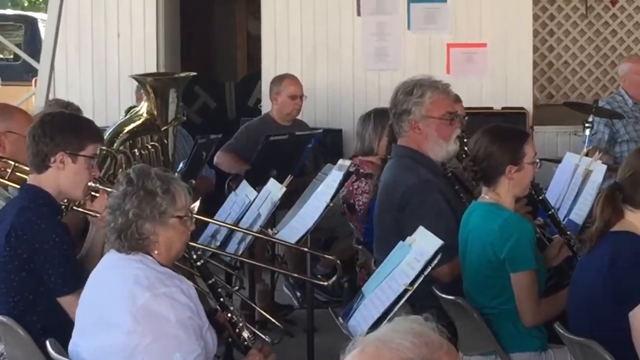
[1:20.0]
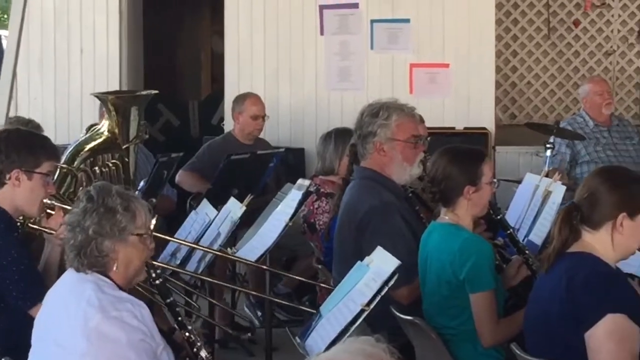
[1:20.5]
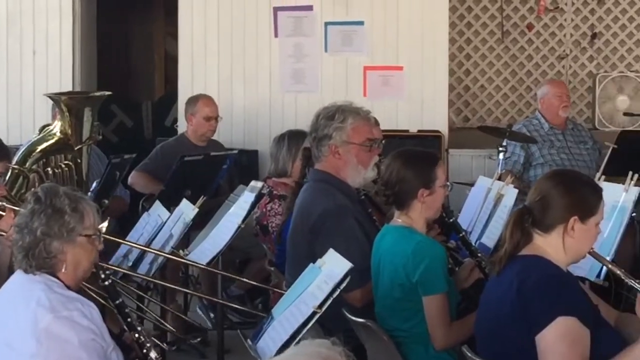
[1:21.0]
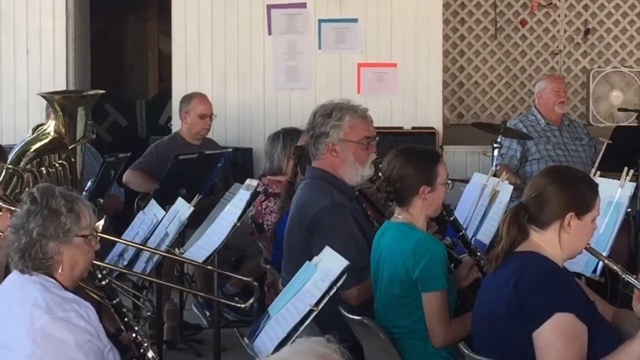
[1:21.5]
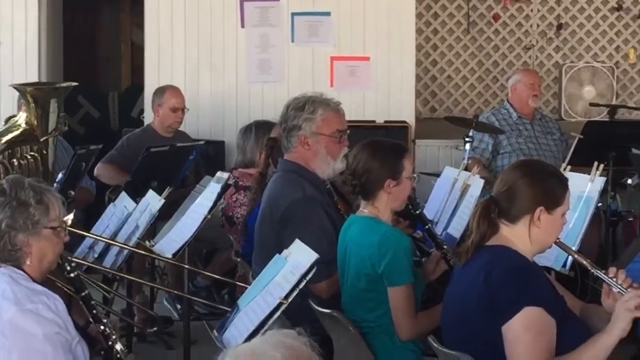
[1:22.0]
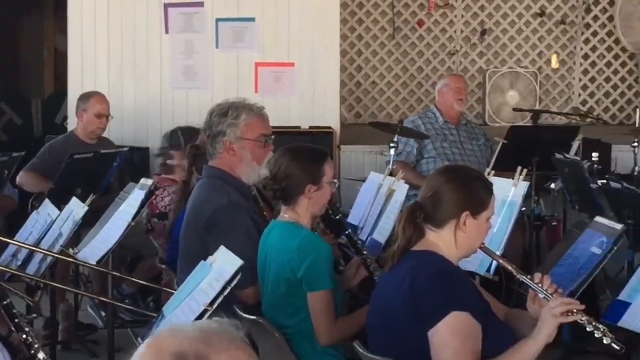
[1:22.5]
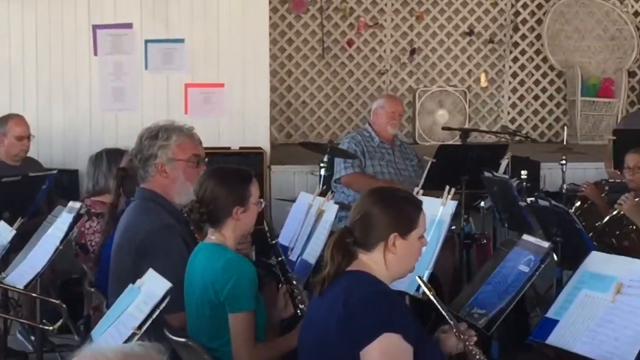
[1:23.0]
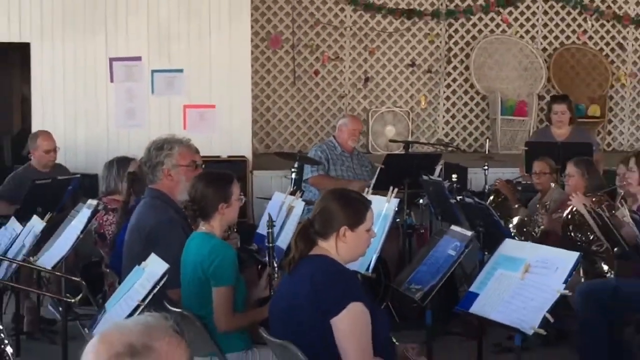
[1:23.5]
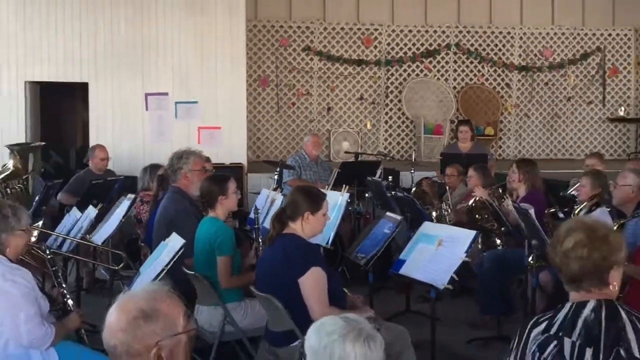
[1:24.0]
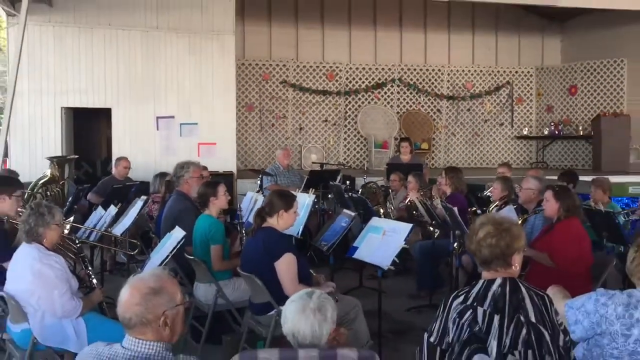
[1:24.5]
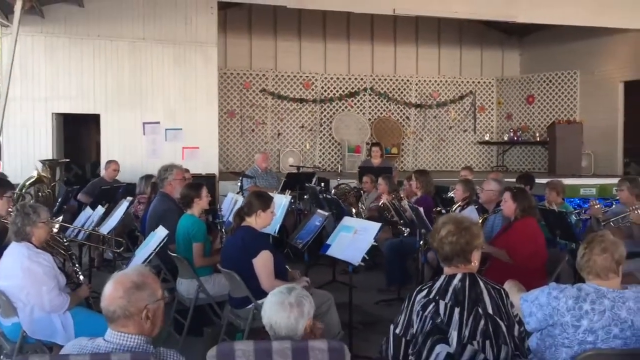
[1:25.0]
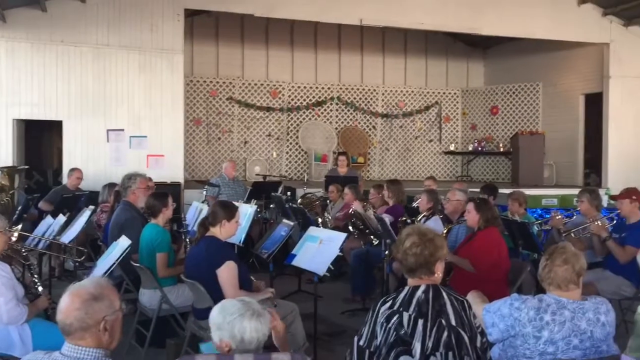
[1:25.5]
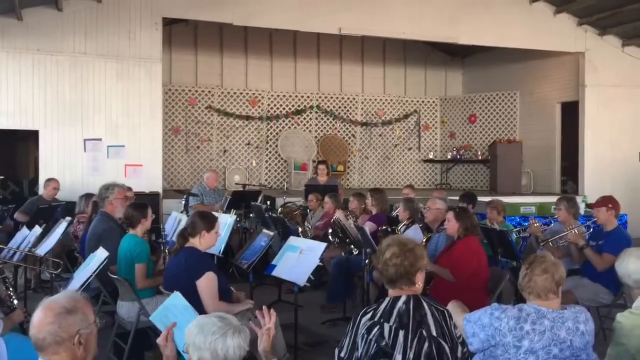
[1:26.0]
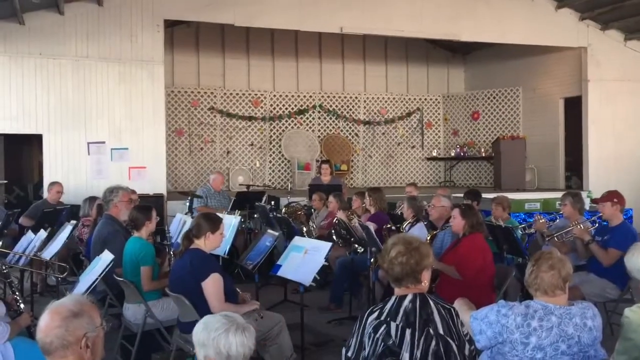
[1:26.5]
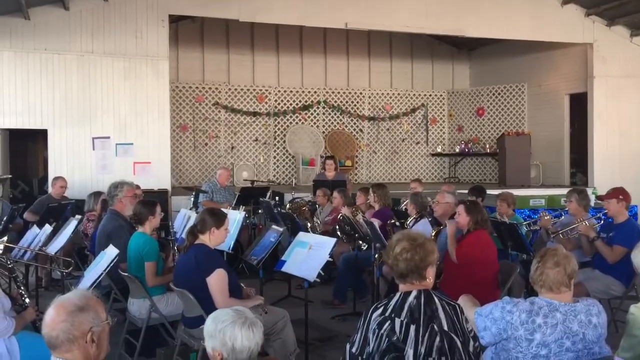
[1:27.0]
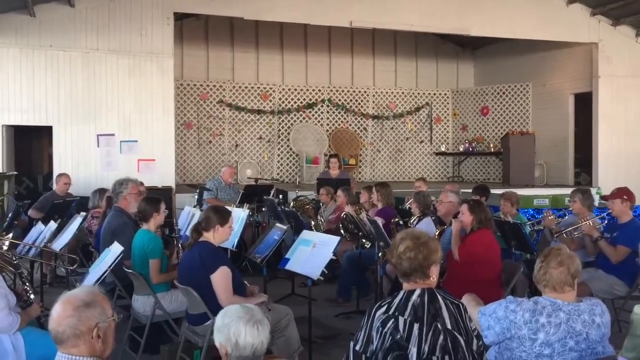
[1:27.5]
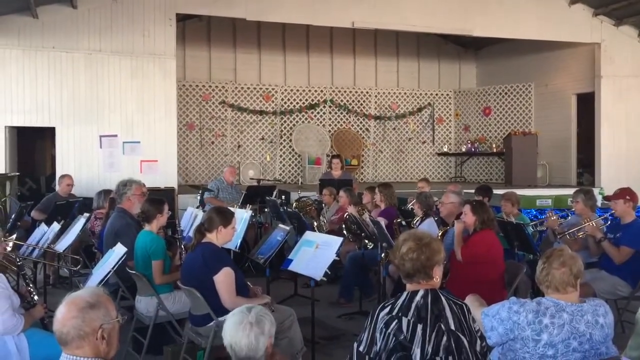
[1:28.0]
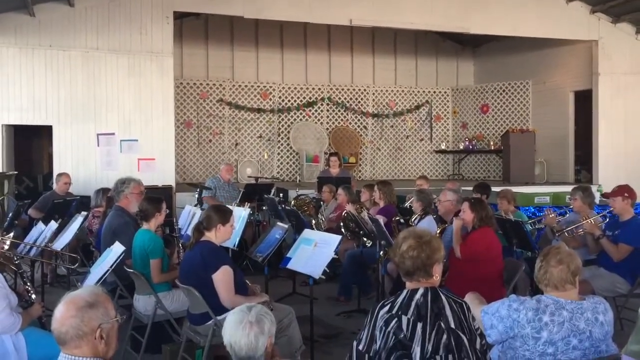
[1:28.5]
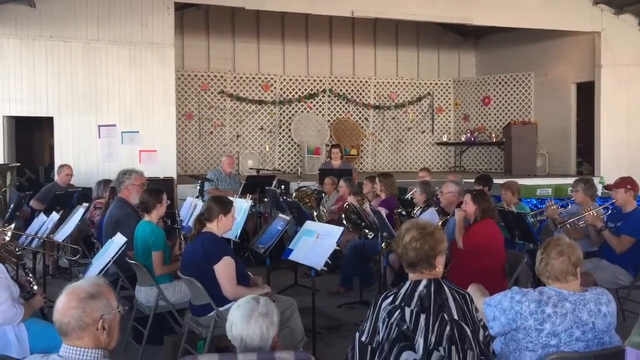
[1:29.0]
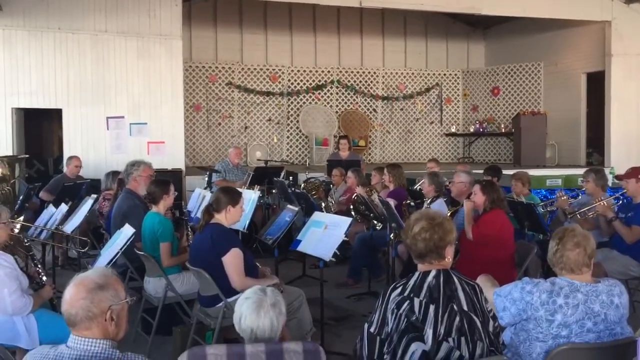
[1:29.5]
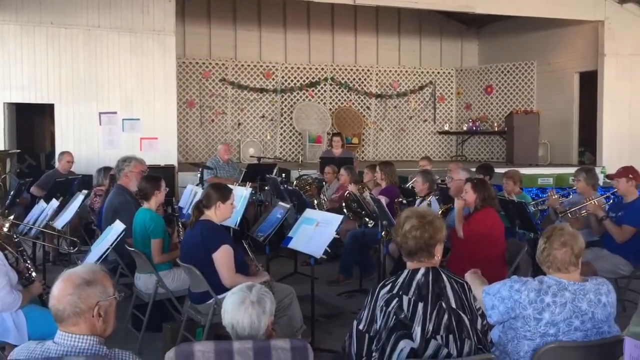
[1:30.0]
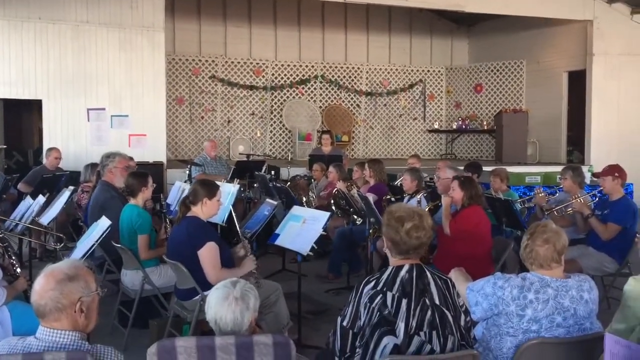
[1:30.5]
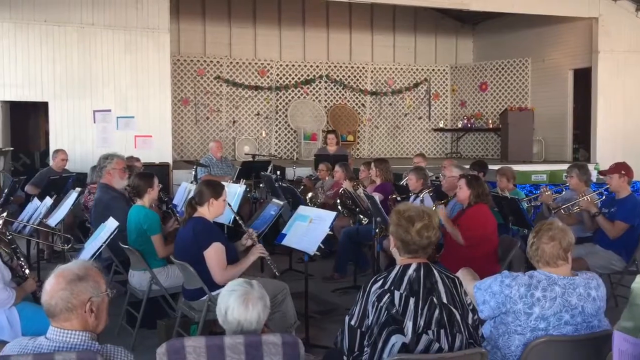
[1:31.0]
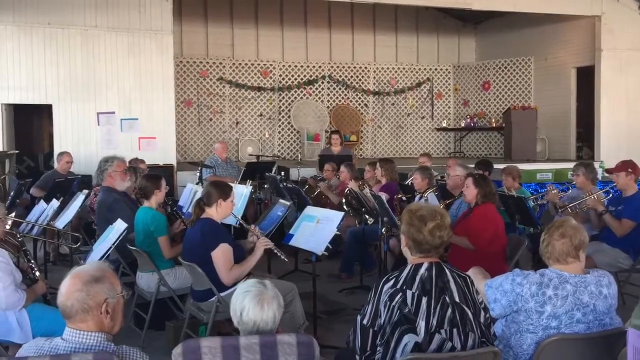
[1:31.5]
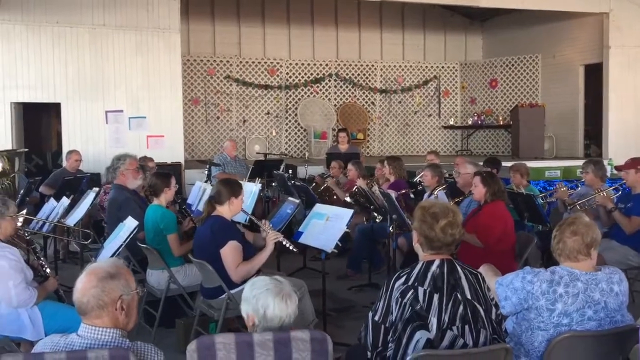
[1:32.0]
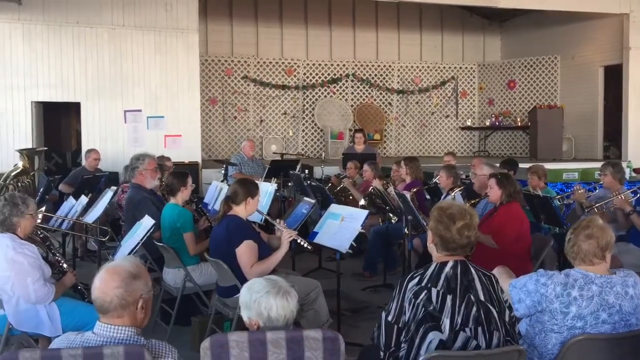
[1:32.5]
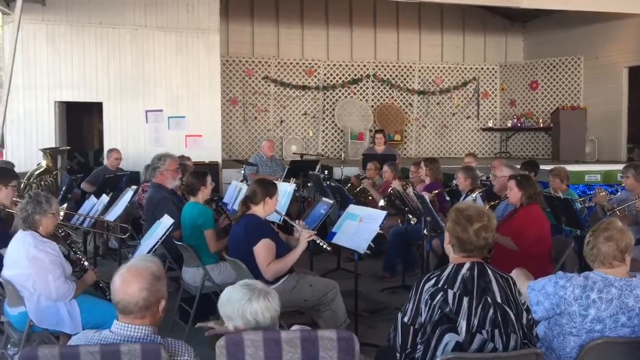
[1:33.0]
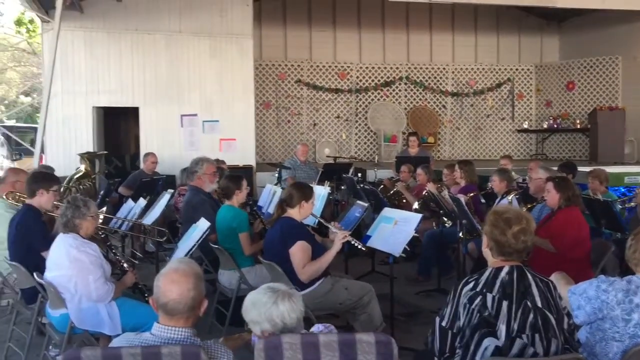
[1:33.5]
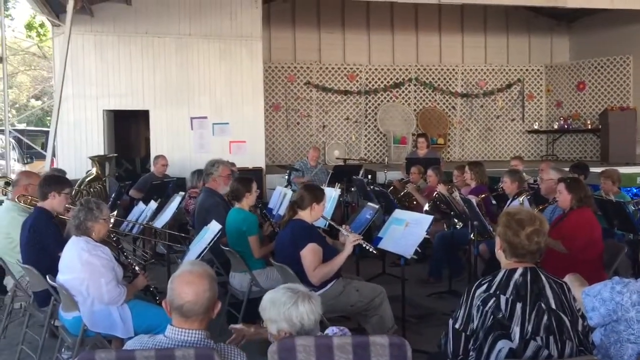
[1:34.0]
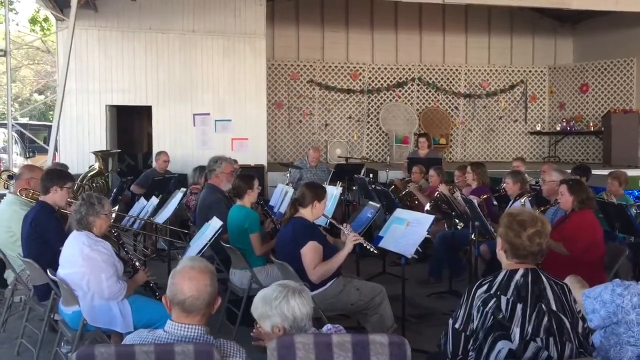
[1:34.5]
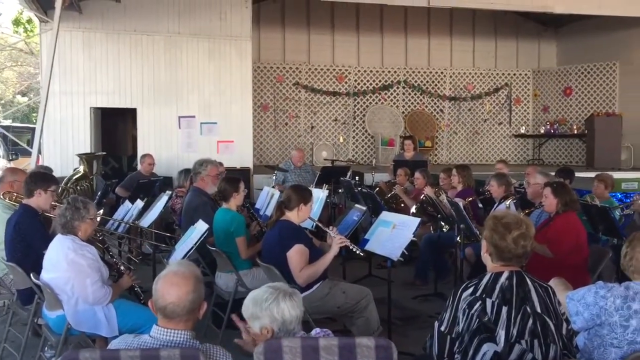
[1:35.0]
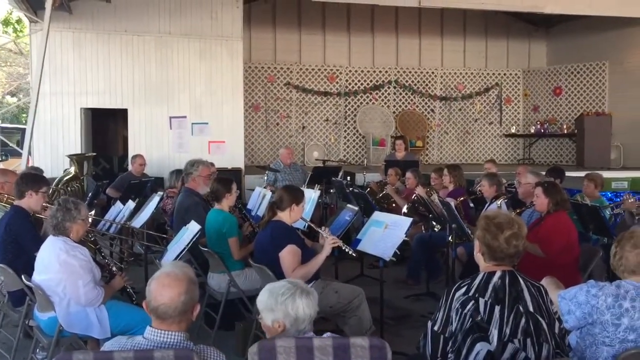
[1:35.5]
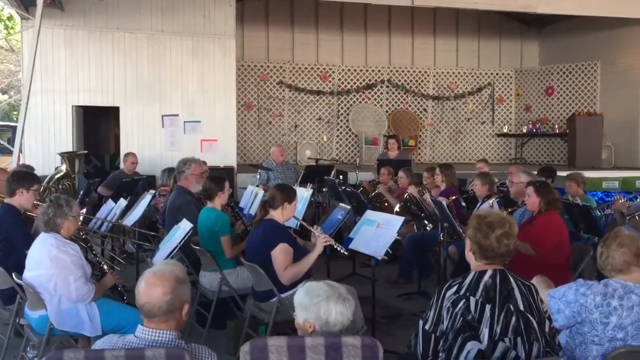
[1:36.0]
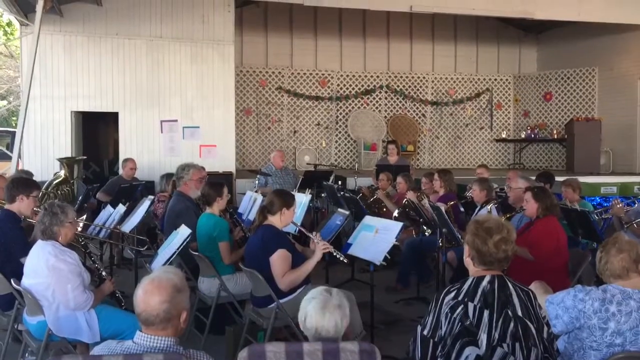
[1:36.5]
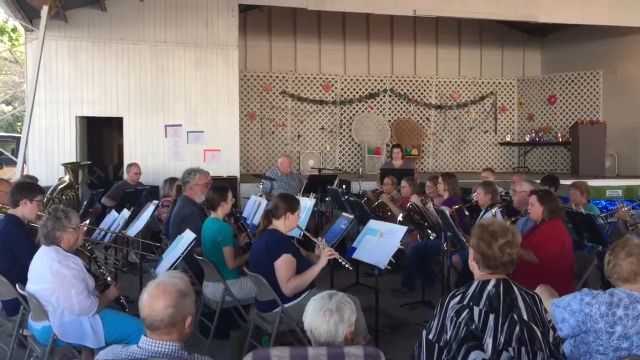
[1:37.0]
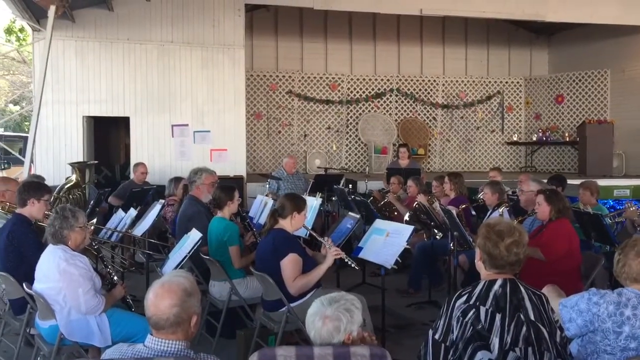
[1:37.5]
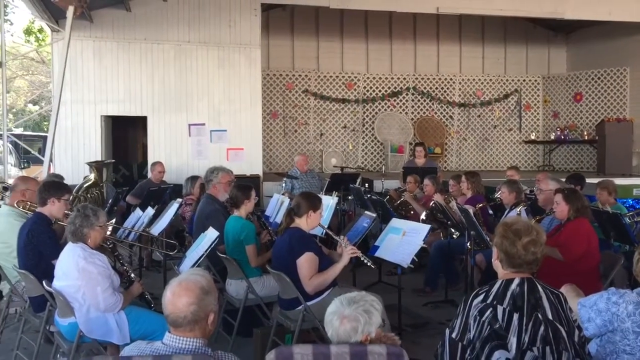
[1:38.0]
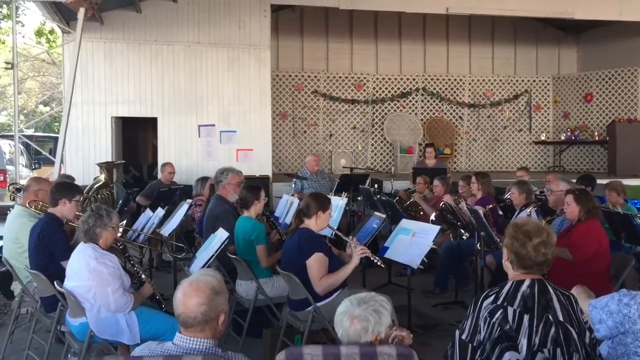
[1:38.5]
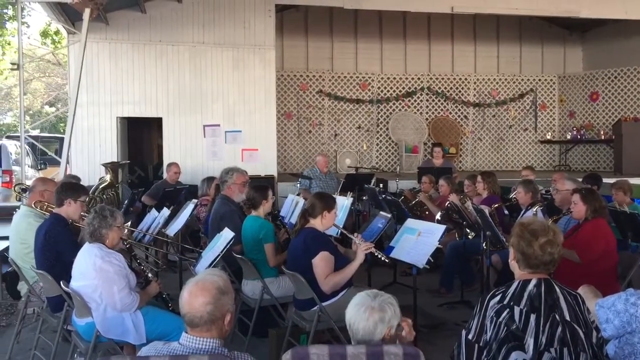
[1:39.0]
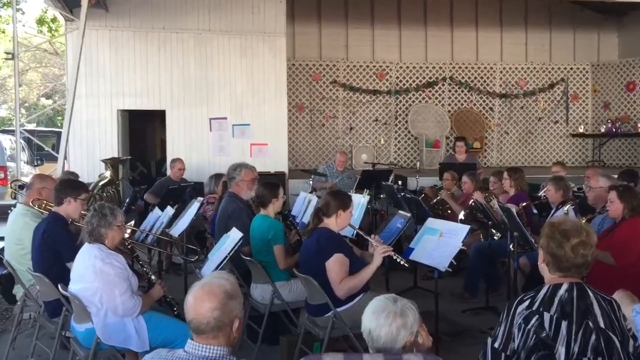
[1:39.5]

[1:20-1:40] The music continues with a close-up shot of about six band members: a woman in a green shirt playing a clarinet, another woman playing a trombone, an unidentified band member playing a tuba, and a man playing a guitar. Whether the guitar is electric or acoustic is unclear, because it is obscured by the bandstand in front of the man. The man in the checked shirt is not only playing the drums but also singing something, possibly words or possibly just scat. The camera pulls out to show about 20 band members, revealing many woodwinds and horns, piccolos, trombones, tubas, a guitar and a percussionist. Whether there are singers is not clear. A clarinetist then holds her instrument up to her mouth, apparently waiting for her cue to play.